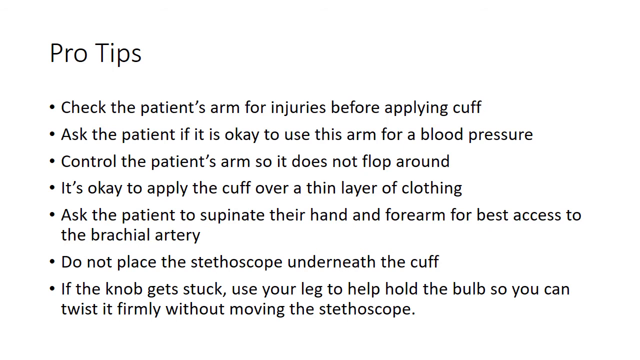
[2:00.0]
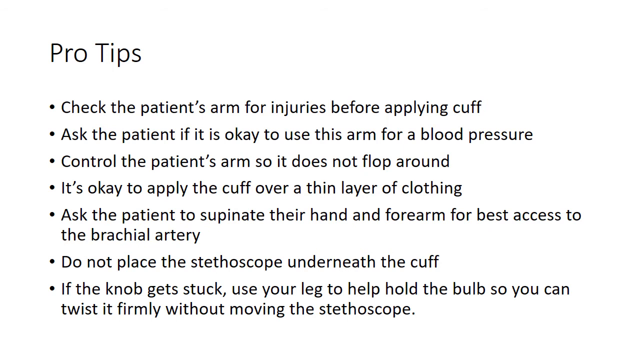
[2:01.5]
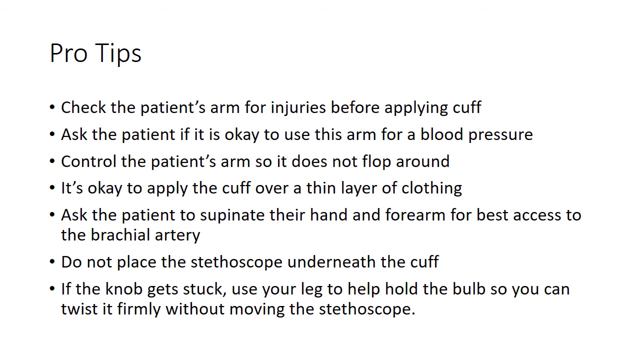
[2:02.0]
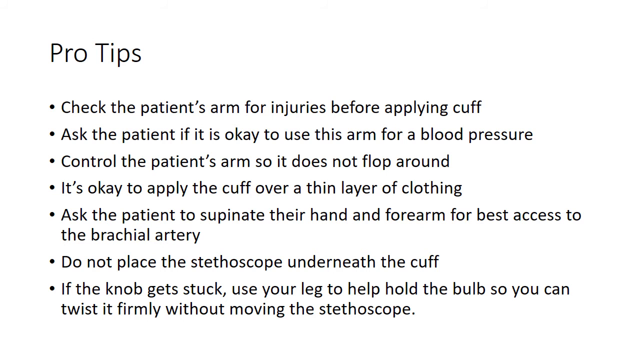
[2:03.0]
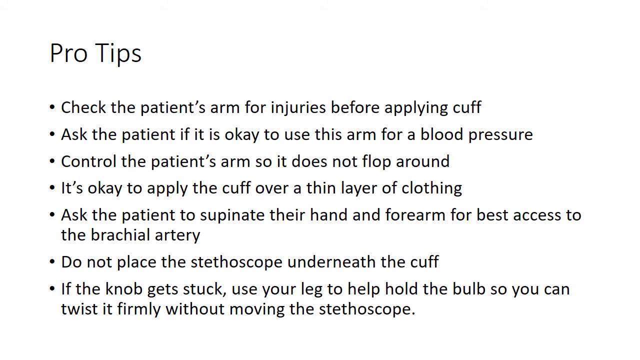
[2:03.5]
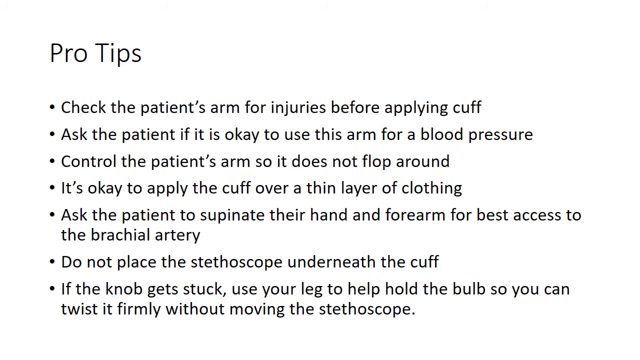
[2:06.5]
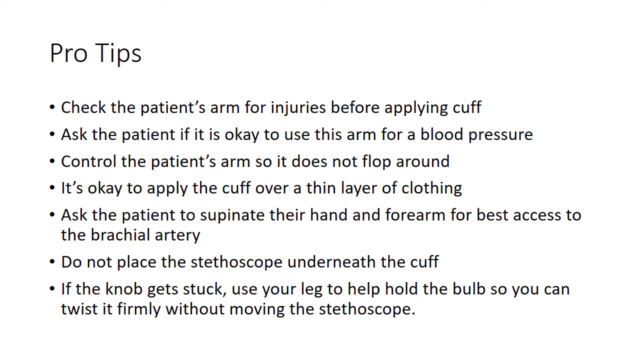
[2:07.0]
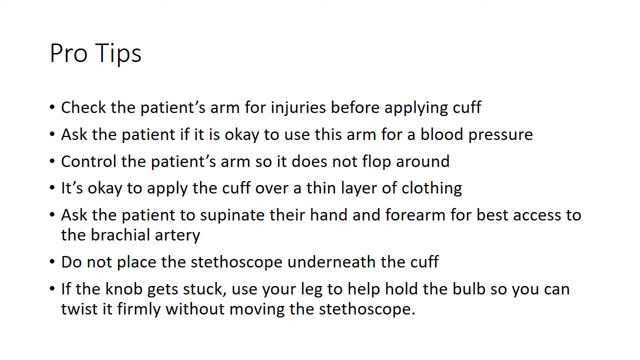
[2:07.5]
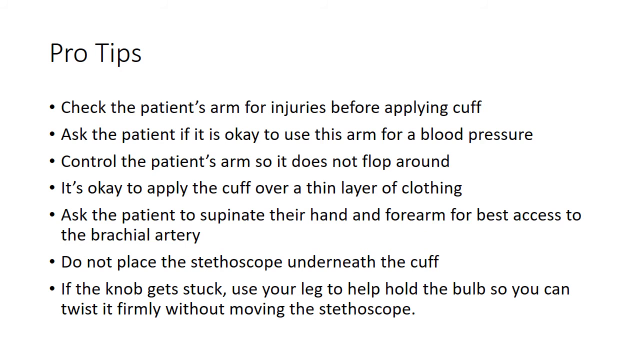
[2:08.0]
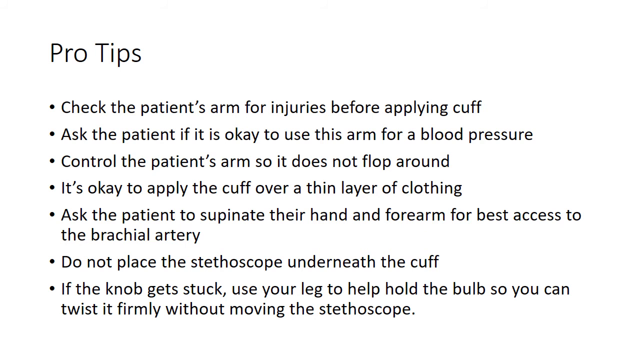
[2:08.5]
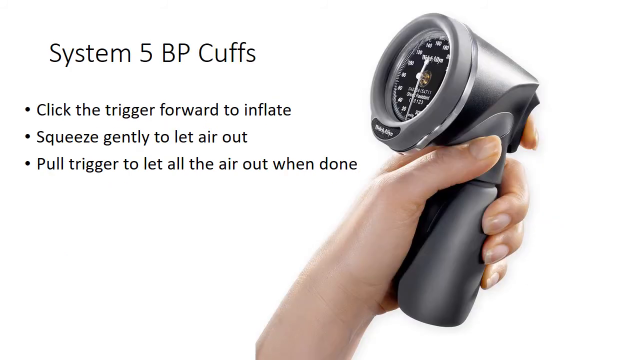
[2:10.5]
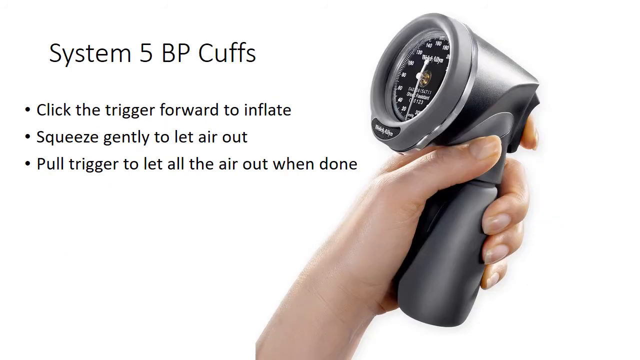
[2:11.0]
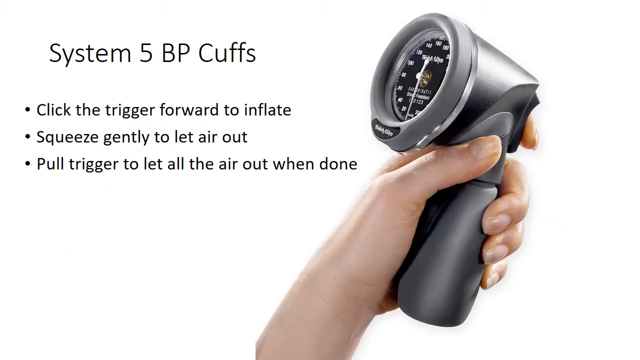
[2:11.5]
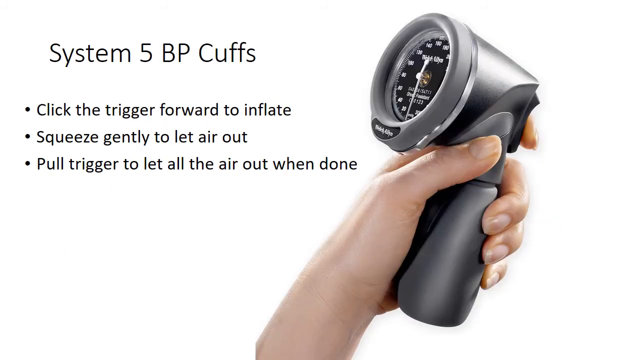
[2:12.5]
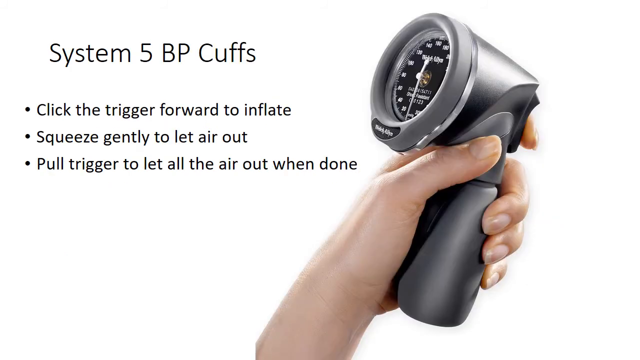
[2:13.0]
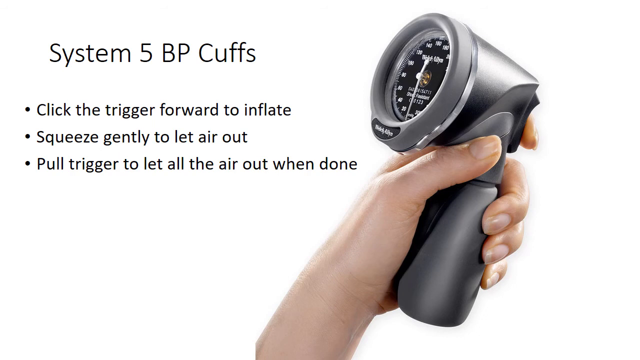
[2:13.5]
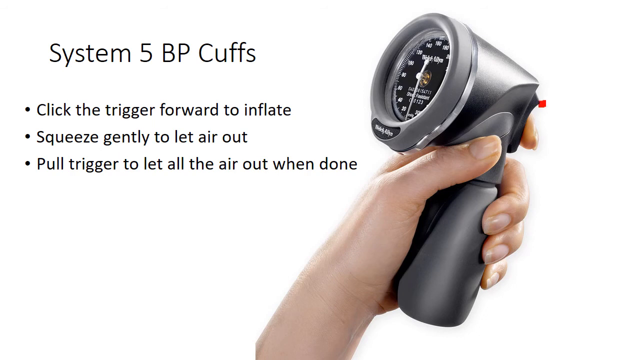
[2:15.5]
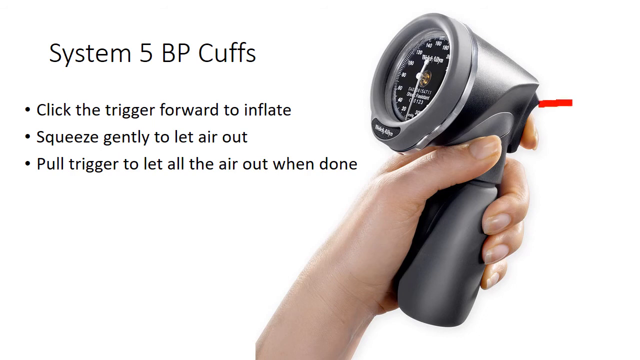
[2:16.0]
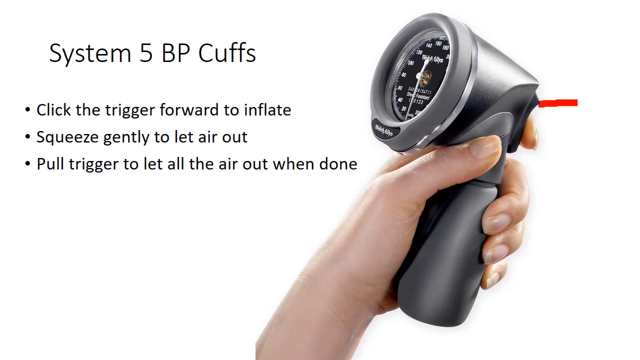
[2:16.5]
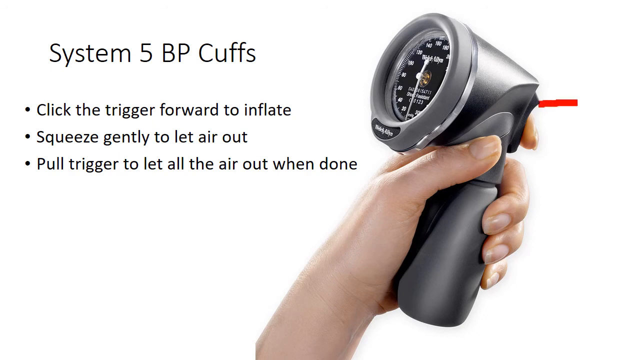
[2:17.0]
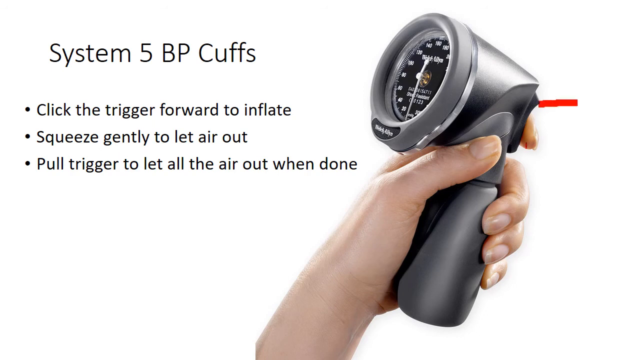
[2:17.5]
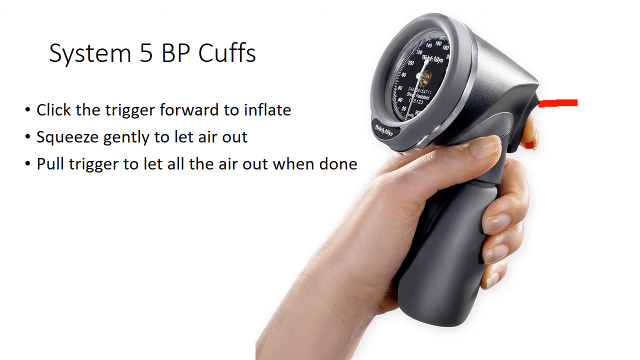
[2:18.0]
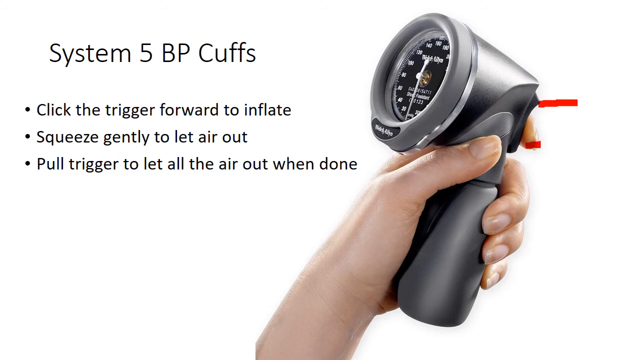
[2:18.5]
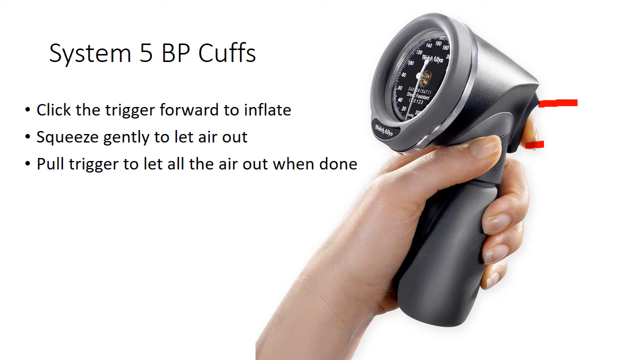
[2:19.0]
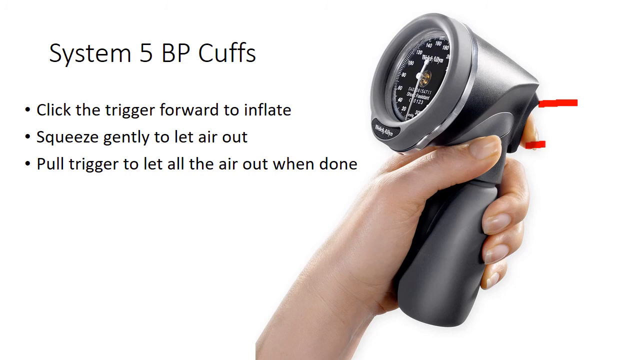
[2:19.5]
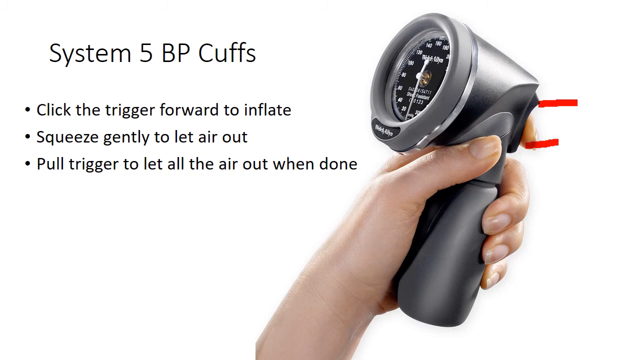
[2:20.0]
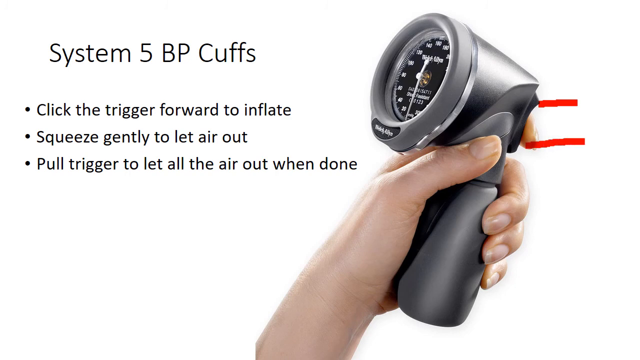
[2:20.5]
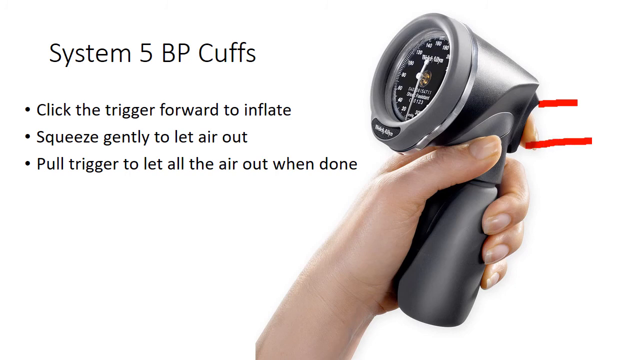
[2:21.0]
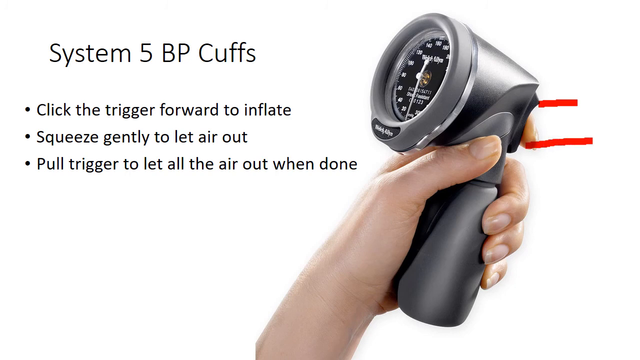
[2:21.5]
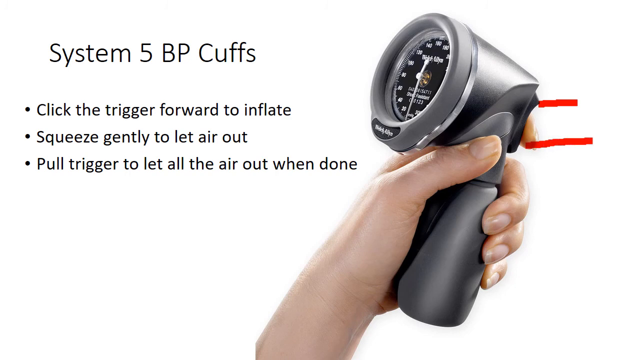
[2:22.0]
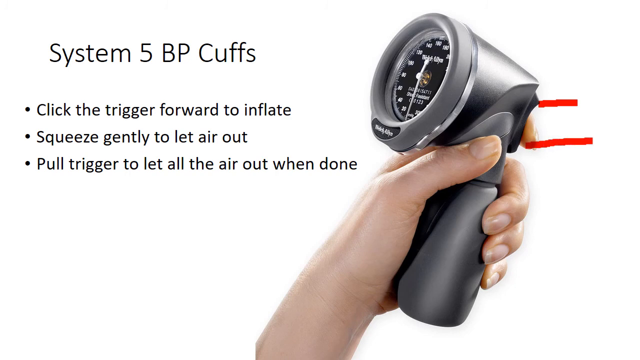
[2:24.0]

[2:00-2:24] Black text on a white background reads "ProTips": "check the patient's arm for injuries before applying cuff," "ask the patient if it is okay to use this arm for a blood pressure," "control the patient's arm so it does not flop around," "it's okay to apply the cuff over a thin layer of clothing," "ask the patient to supinate their hand and forearm for best access to the brachial artery," "do not place the stethoscope underneath the cuff" and "if the knob gets stuck, use your leg to help hold the bulb so that you can twist it firmly without moving the stethoscope." Next, text in the top right corner reads "system 5 BP cuff" and "click the trigger forward to inflate, squeeze gently to let air out, and pull trigger to let all the air out when done." On the left side, a Caucasian hand reaches in from the bottom holding the system 5 BP cuff. On top of the handle is a dial of some sort with numbers running clockwise around it, and two red lines jut out from behind the piece of equipment.